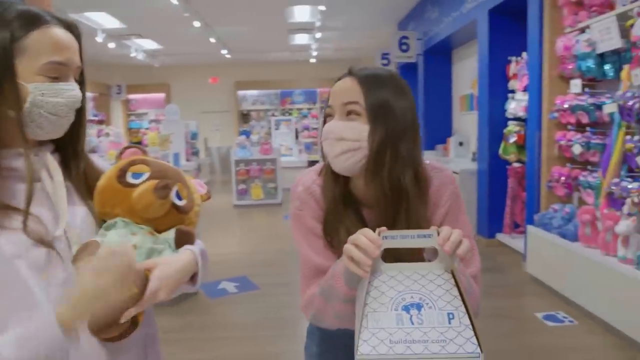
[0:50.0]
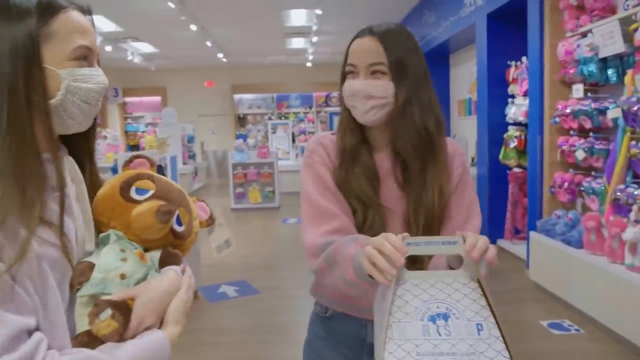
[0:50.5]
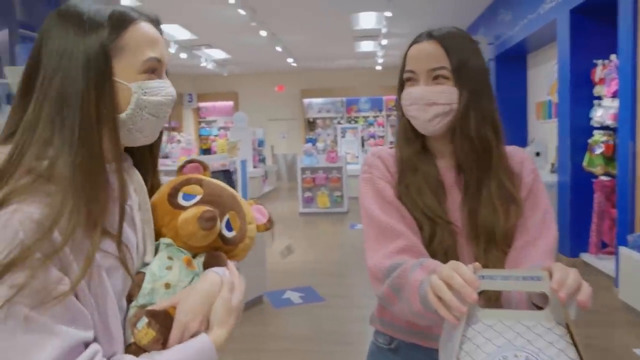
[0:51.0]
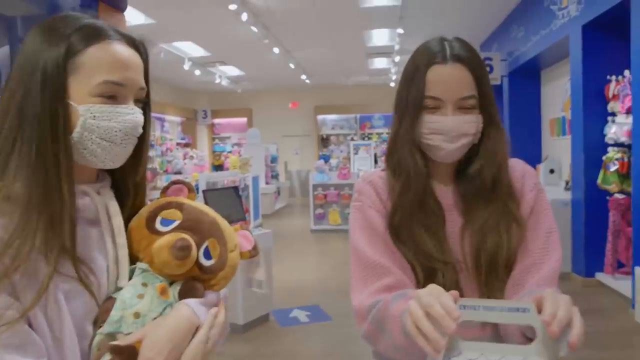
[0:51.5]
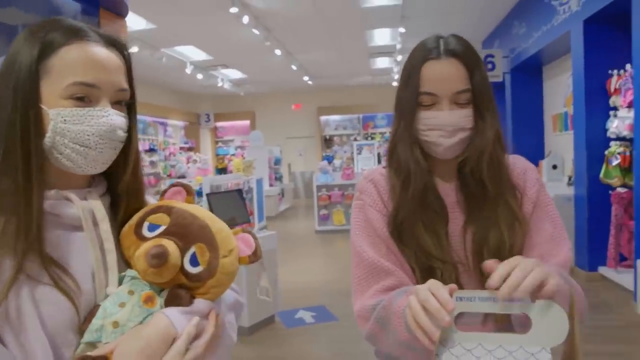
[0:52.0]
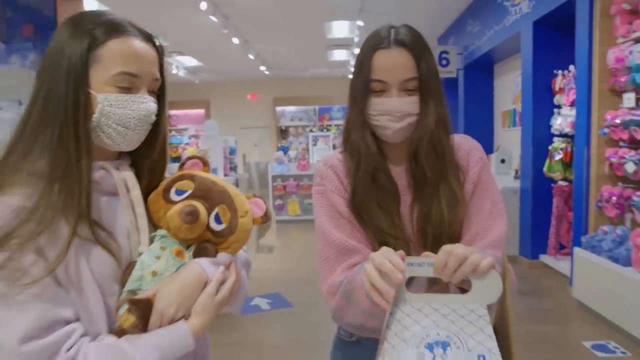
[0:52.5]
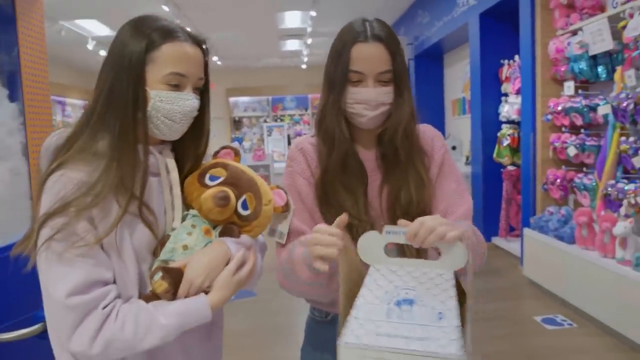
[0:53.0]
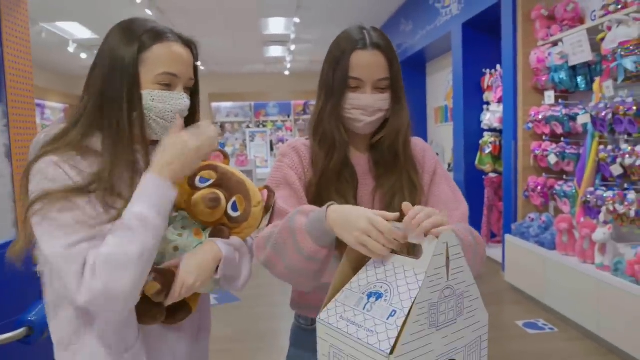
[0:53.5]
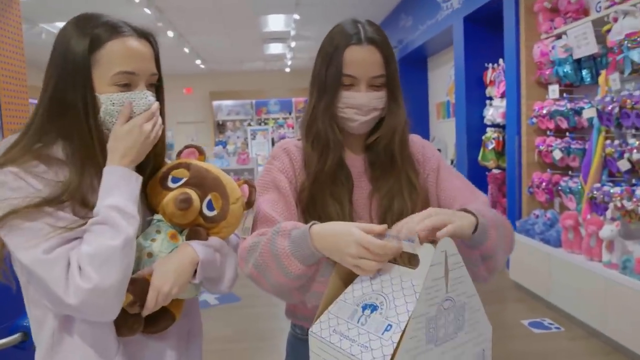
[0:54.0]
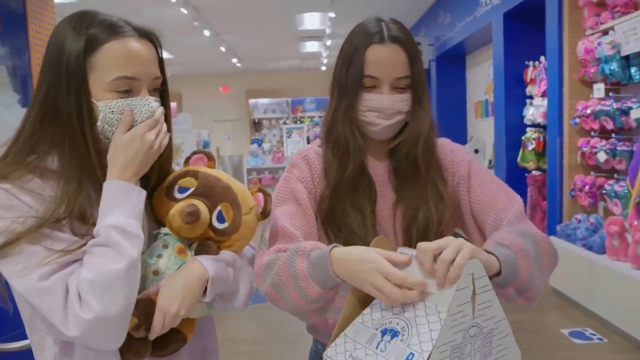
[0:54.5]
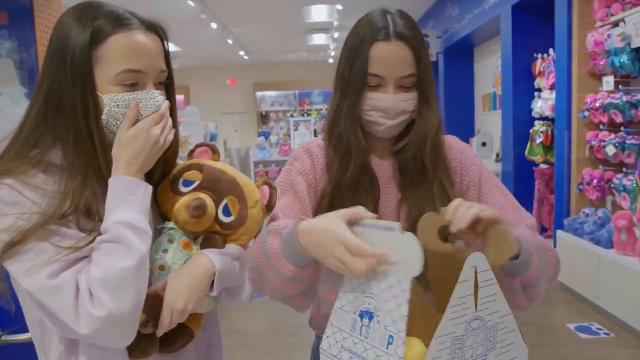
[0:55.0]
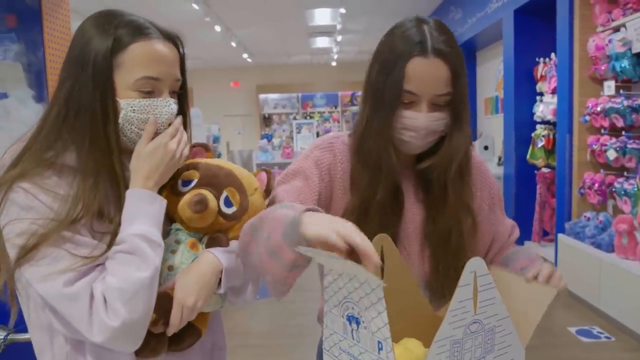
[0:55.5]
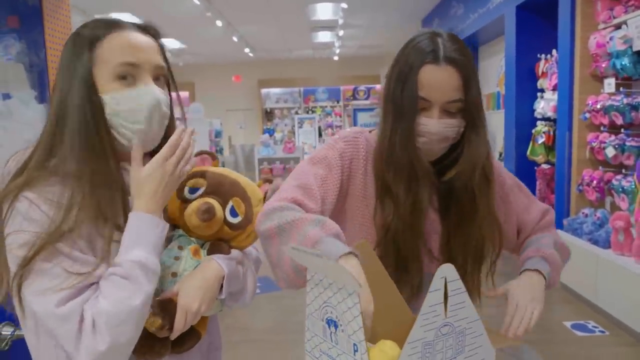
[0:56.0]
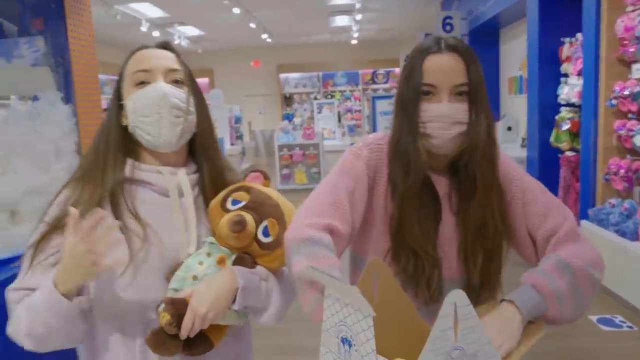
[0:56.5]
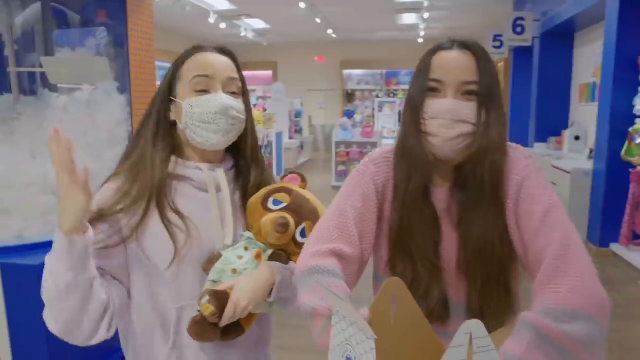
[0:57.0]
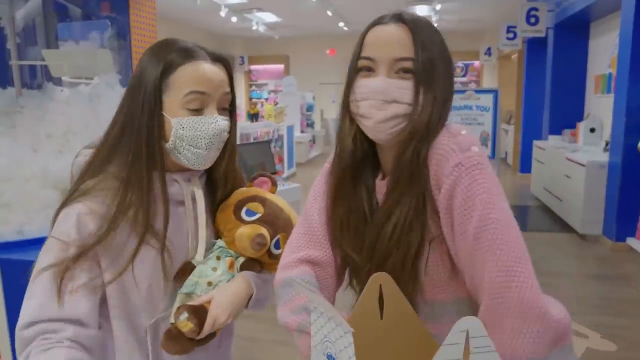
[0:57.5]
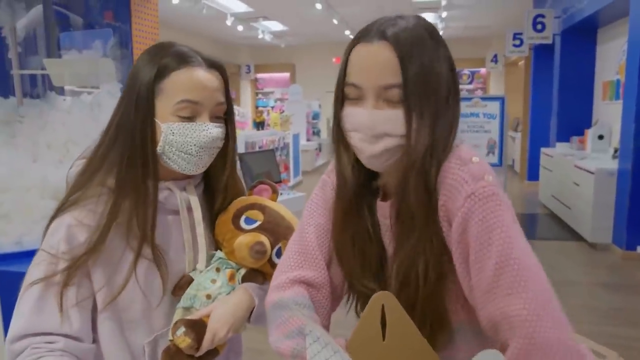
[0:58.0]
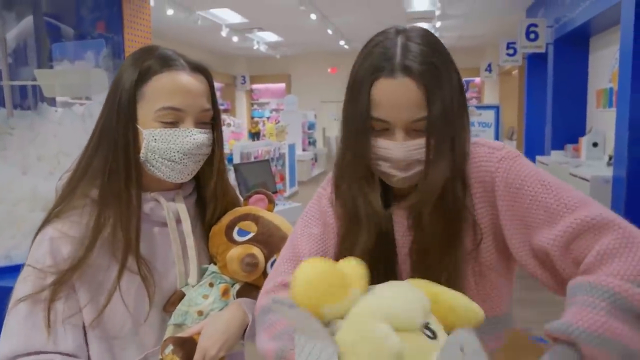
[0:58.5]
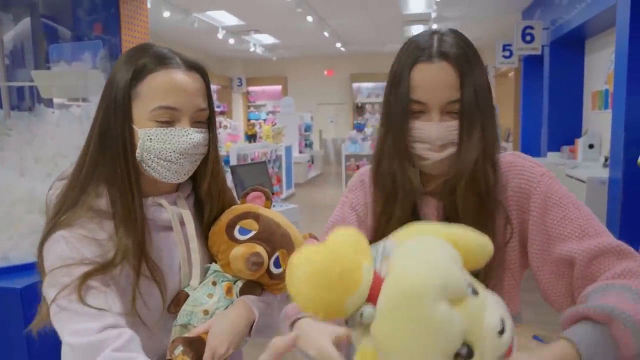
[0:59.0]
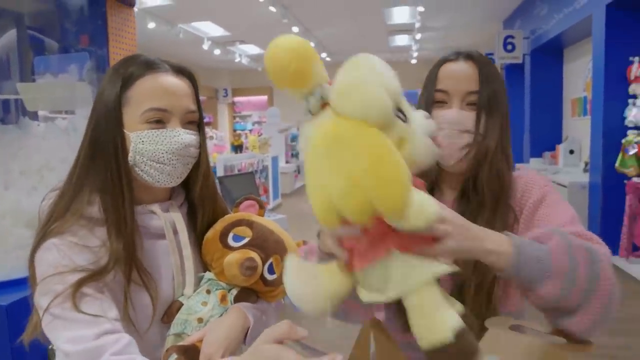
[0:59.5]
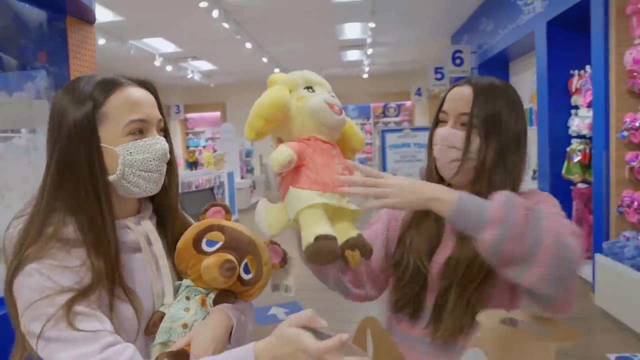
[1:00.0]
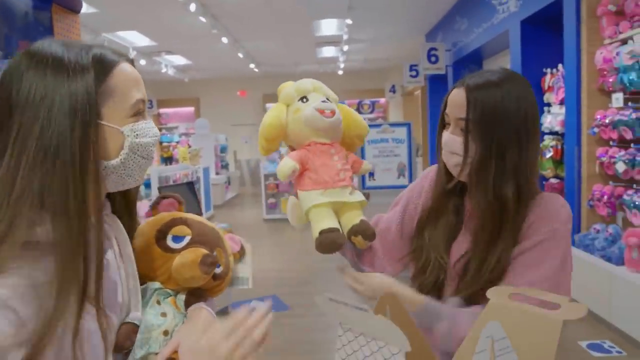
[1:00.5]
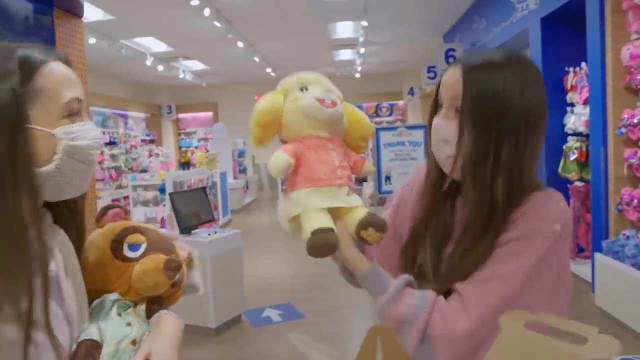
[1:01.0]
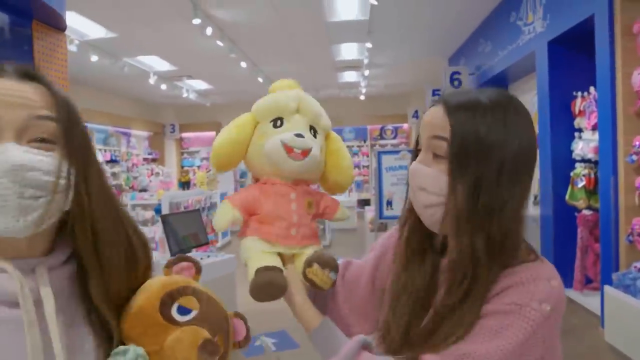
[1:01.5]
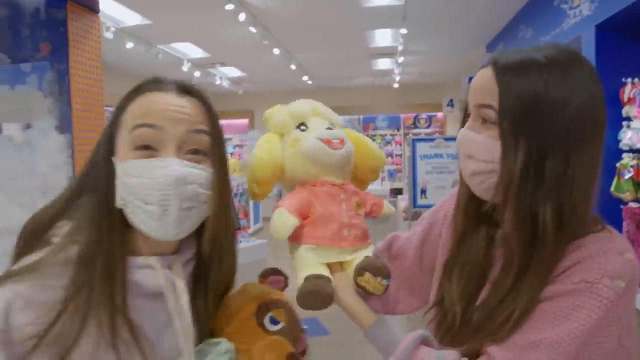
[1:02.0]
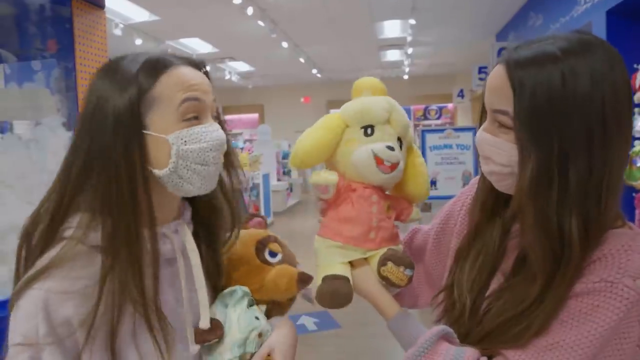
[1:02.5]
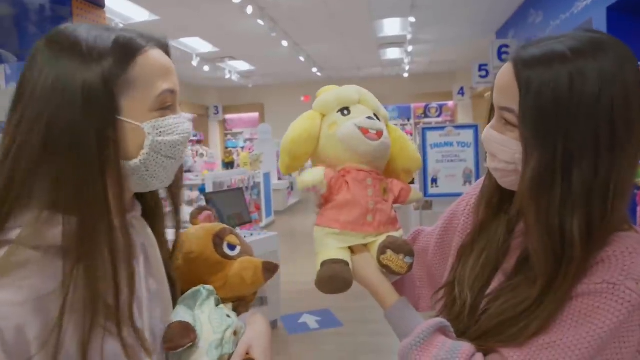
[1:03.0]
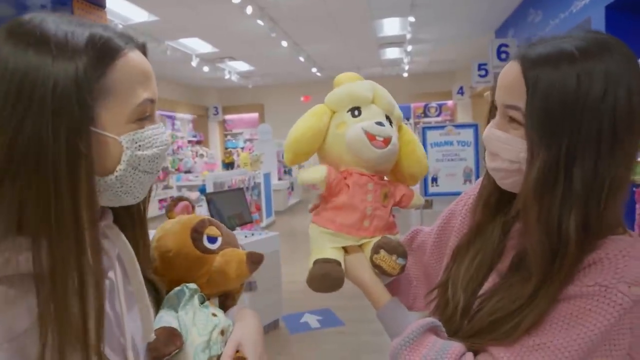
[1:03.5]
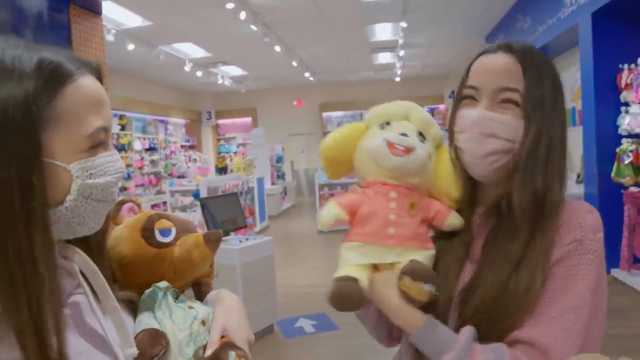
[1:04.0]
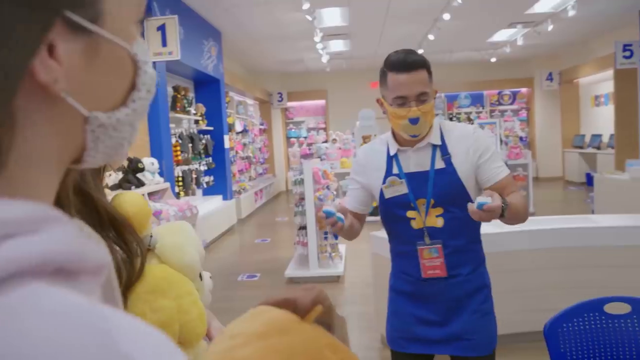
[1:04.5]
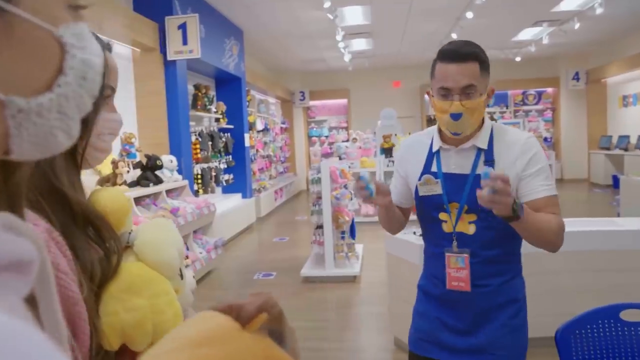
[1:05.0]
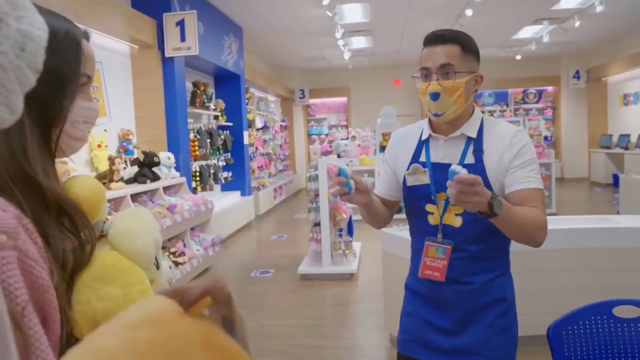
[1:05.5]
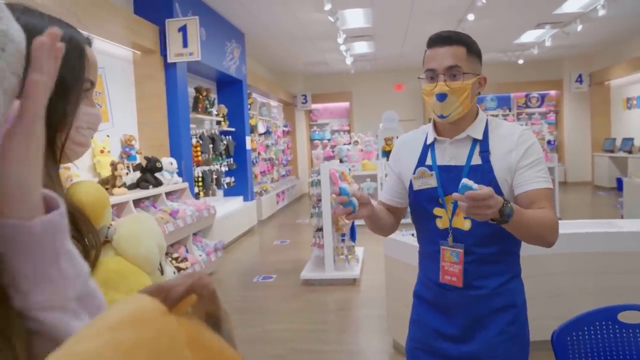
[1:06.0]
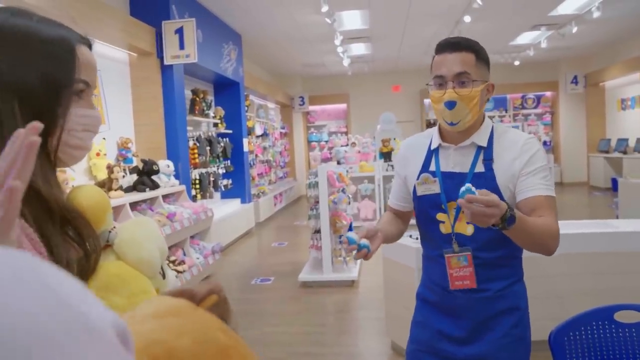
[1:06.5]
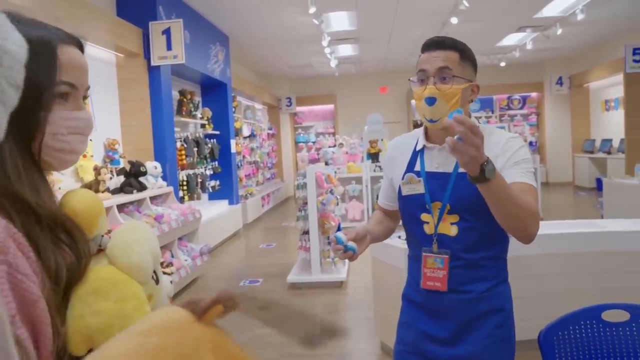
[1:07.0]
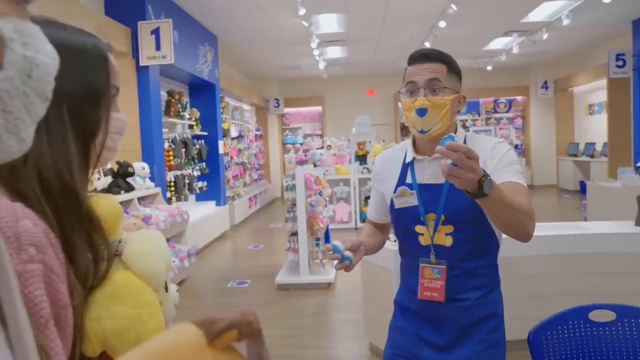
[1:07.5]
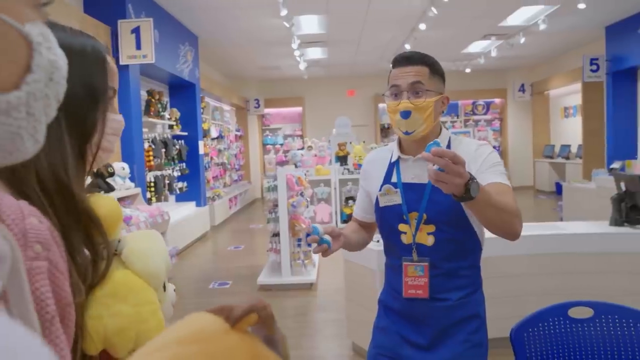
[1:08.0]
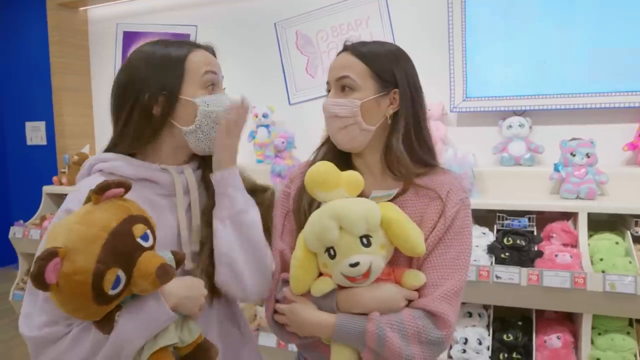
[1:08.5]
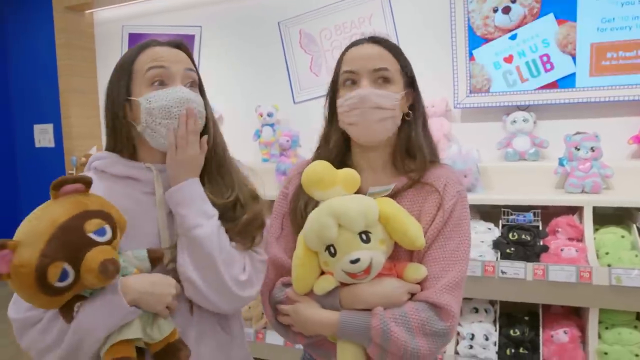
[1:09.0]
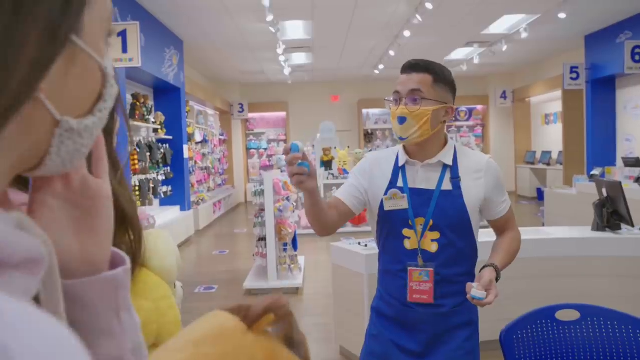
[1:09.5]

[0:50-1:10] The woman on the left holds her teddy bear like a baby while watching the other woman unwrap the other carton, cheering as she does. Out of the carton the second woman removes another teddy bear and jumps up and down with excitement. Then a man joins them, holding small gadgets that look like remotes, and explains to them what the gadgets do. He wears a blue overall and a tag around his neck, and he is also very excited. Behind them are displays on the wall and a computer. The women hold their teddy bears, very happy.